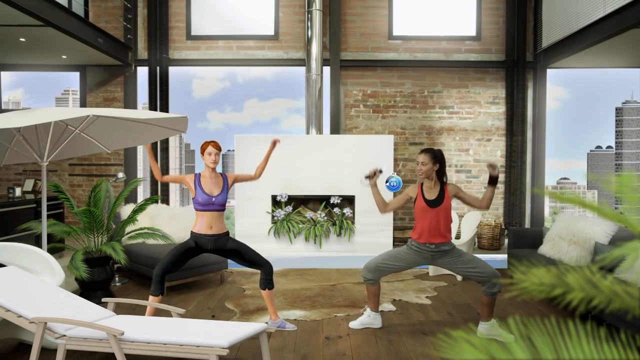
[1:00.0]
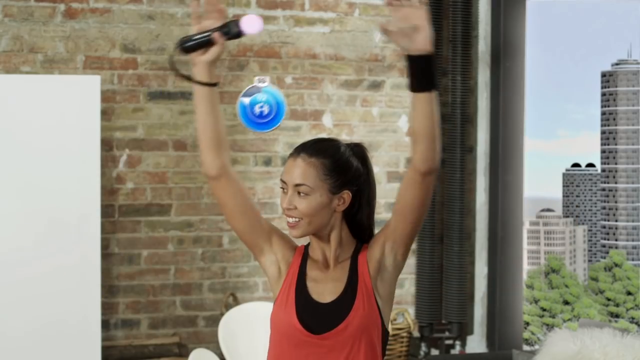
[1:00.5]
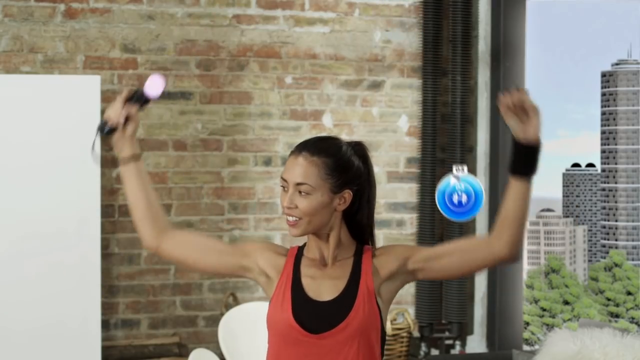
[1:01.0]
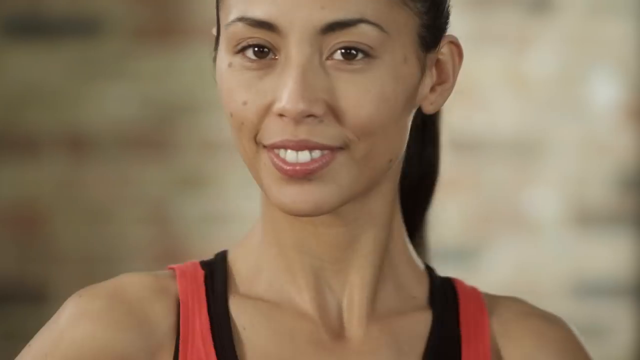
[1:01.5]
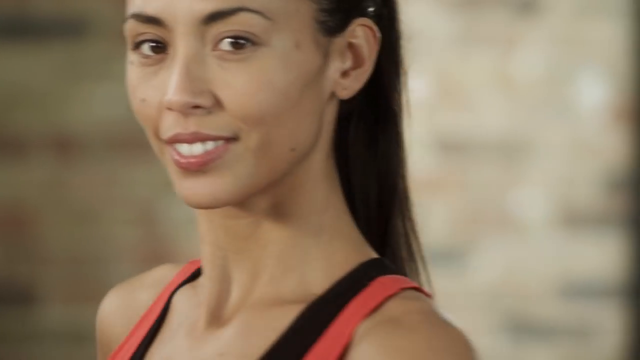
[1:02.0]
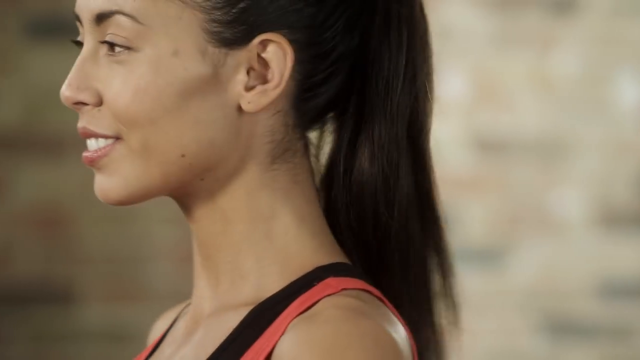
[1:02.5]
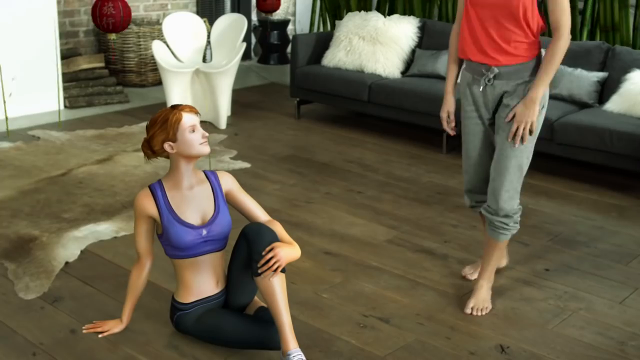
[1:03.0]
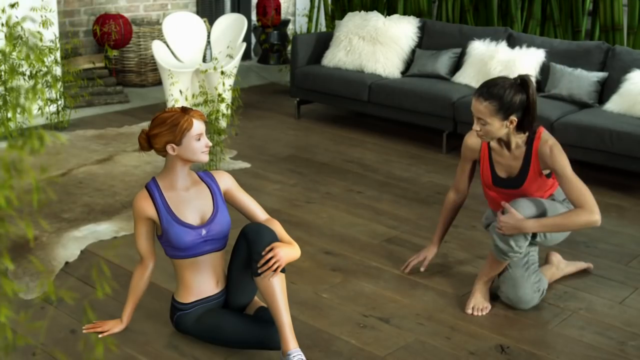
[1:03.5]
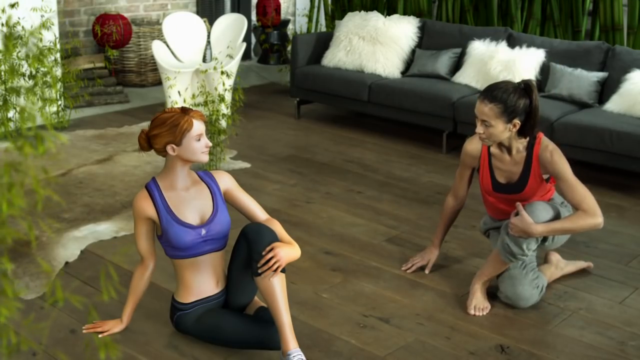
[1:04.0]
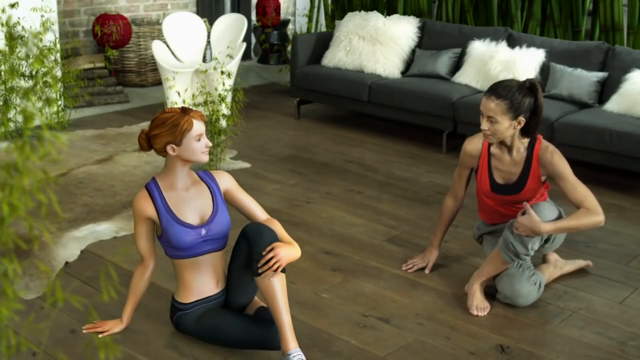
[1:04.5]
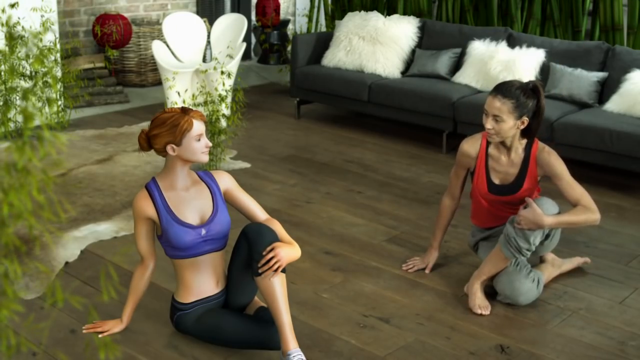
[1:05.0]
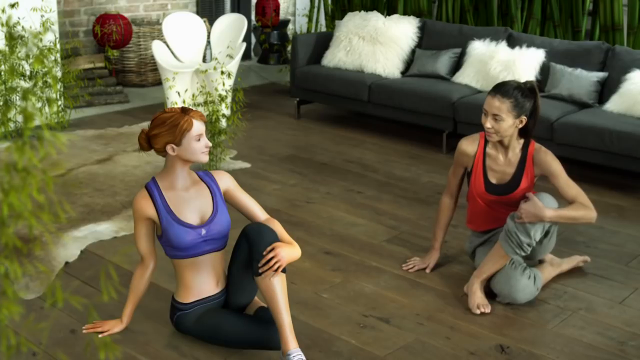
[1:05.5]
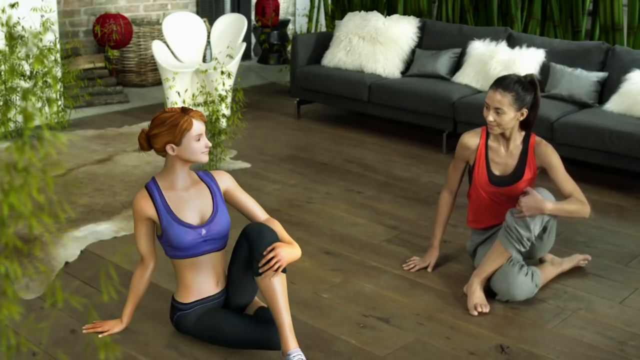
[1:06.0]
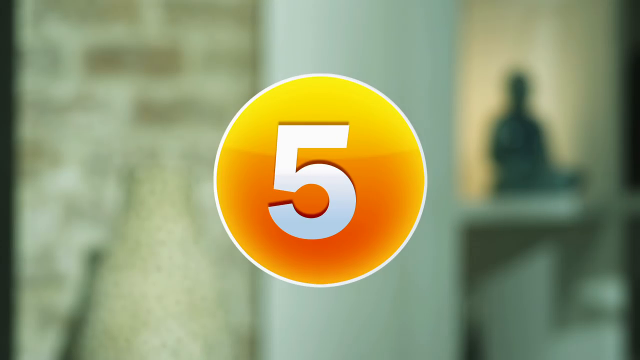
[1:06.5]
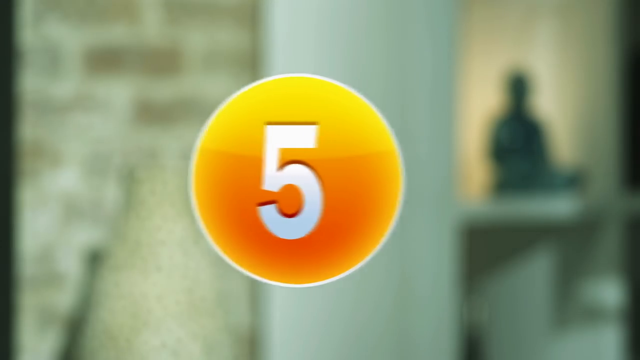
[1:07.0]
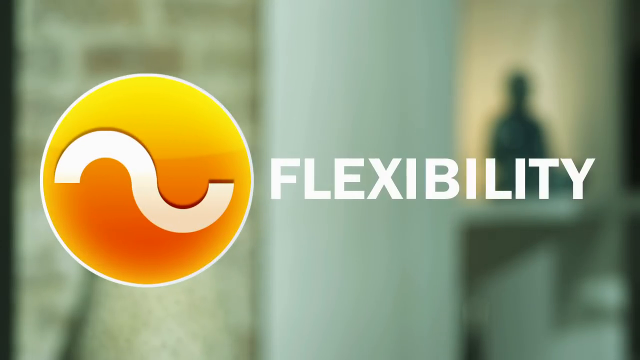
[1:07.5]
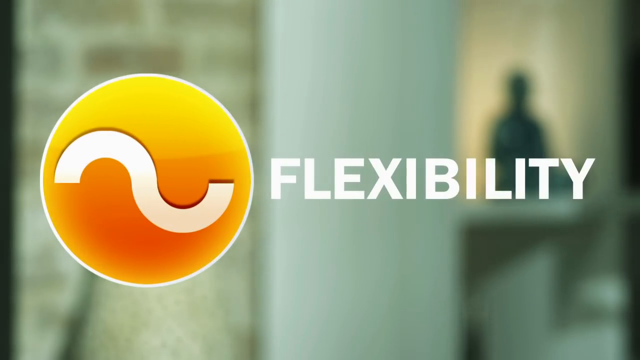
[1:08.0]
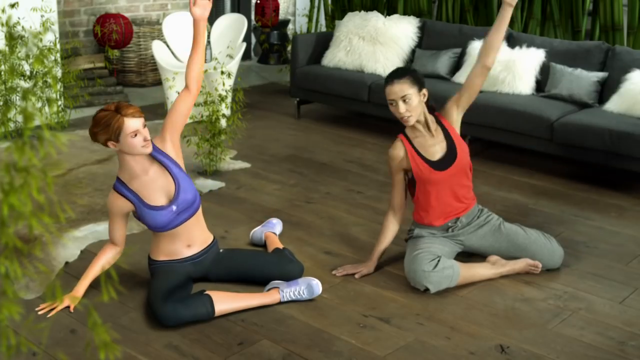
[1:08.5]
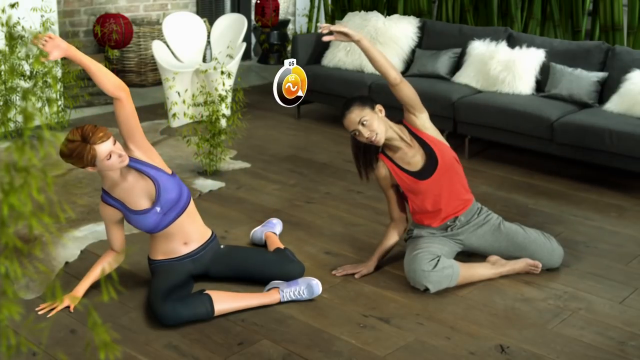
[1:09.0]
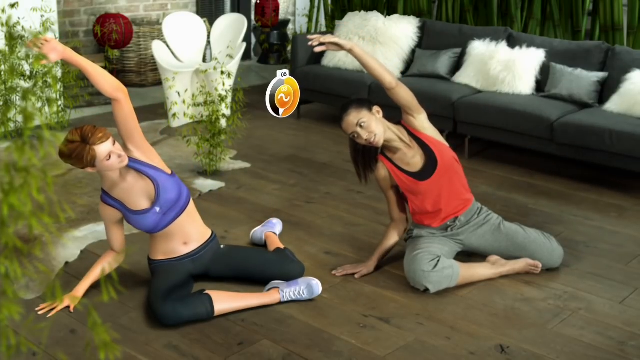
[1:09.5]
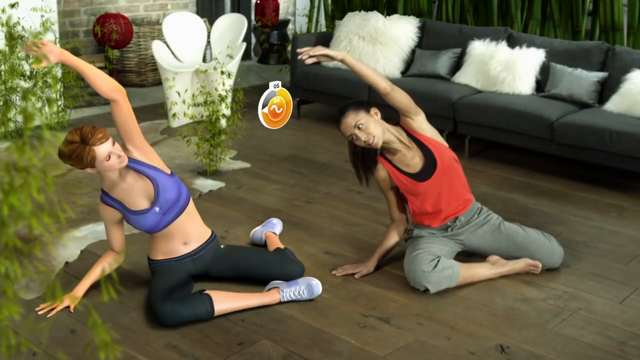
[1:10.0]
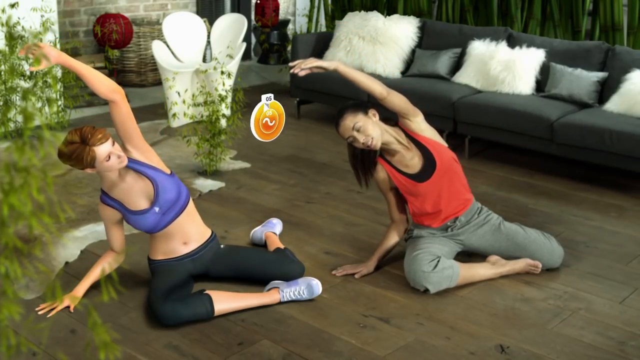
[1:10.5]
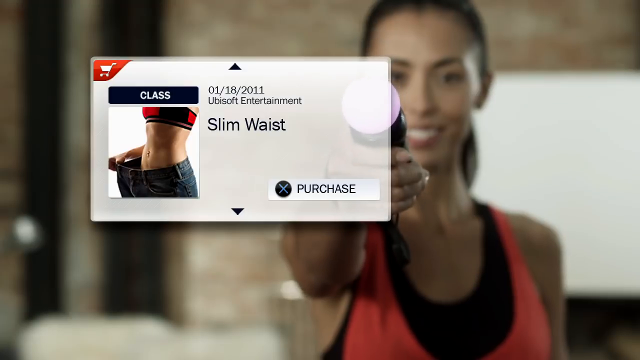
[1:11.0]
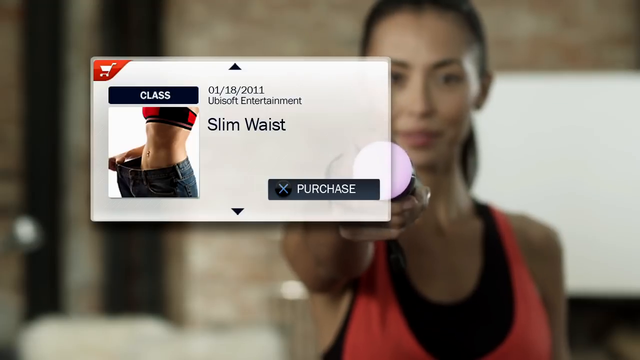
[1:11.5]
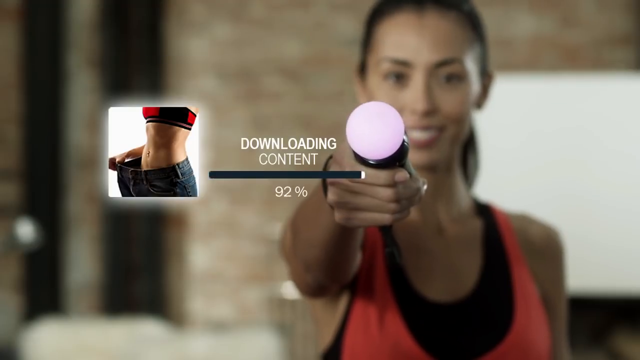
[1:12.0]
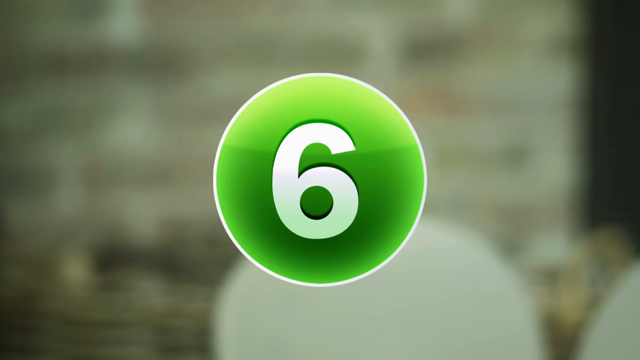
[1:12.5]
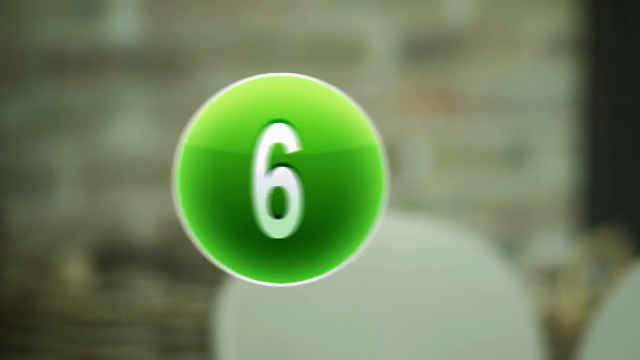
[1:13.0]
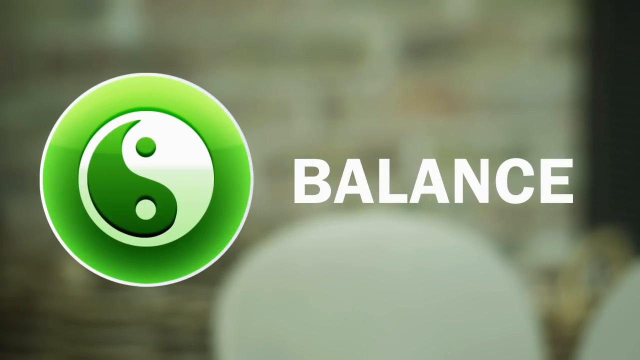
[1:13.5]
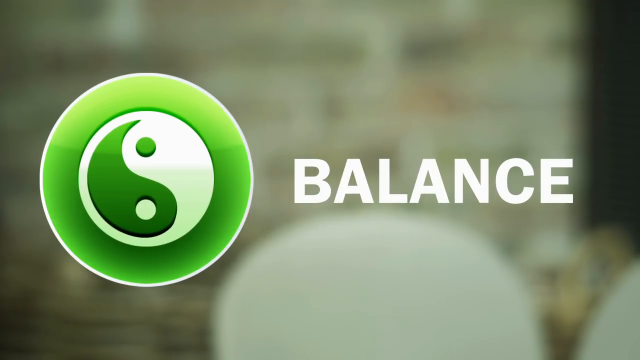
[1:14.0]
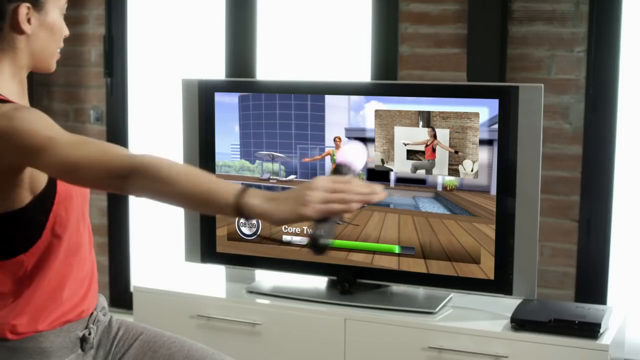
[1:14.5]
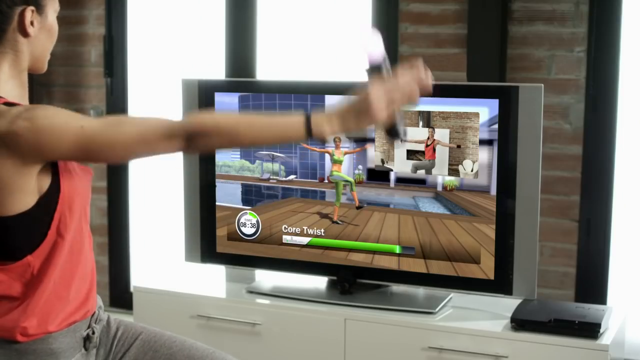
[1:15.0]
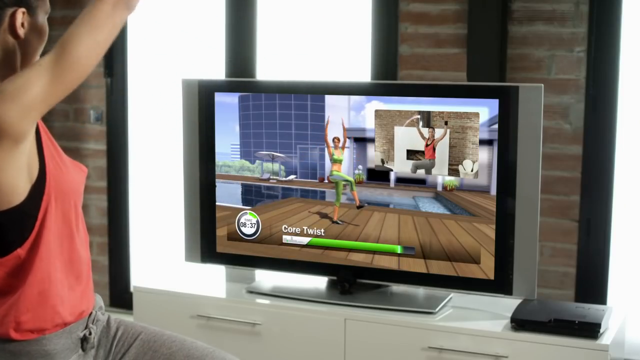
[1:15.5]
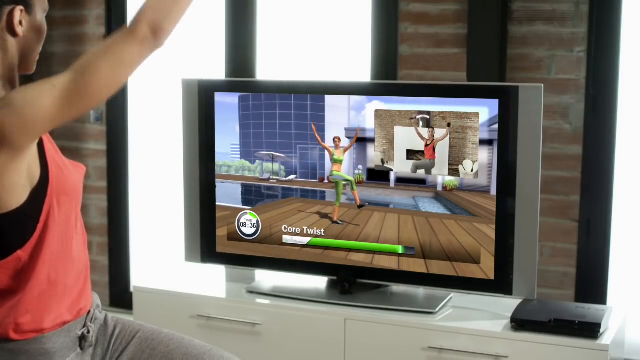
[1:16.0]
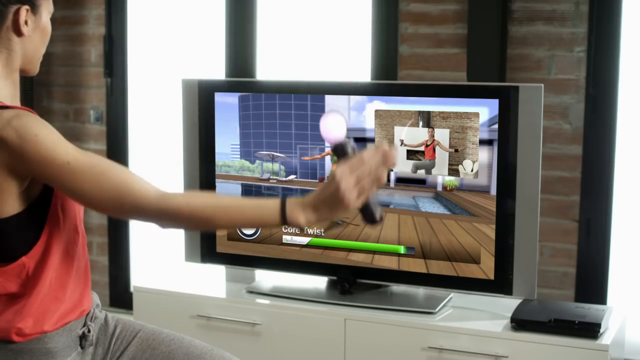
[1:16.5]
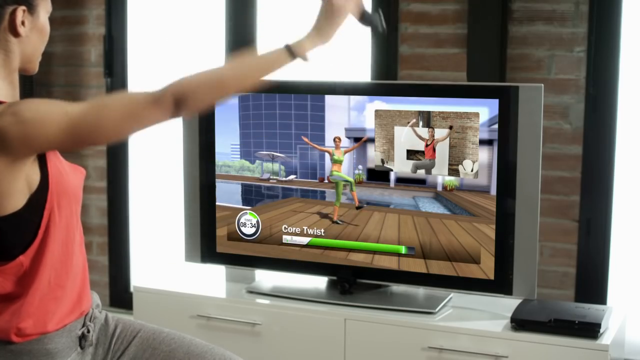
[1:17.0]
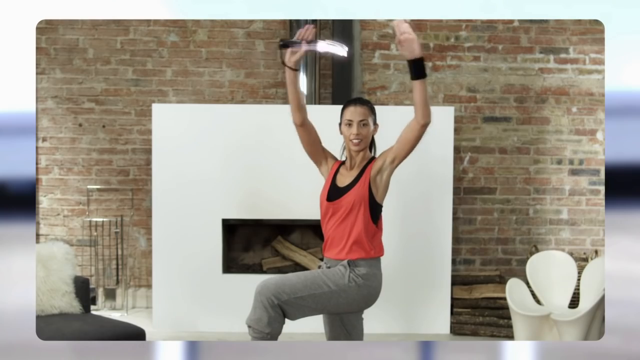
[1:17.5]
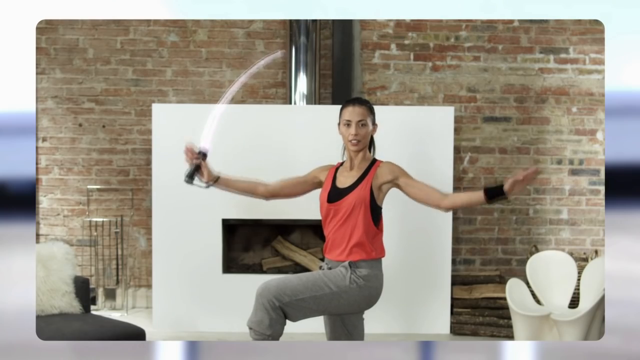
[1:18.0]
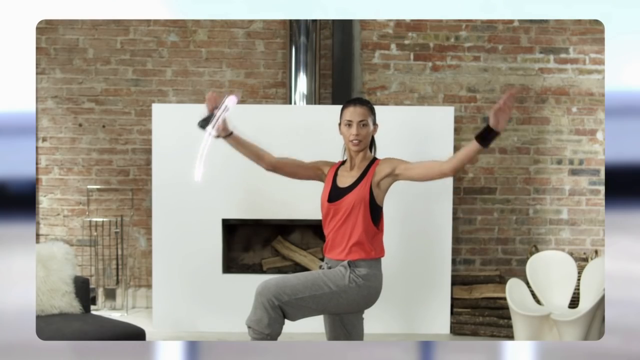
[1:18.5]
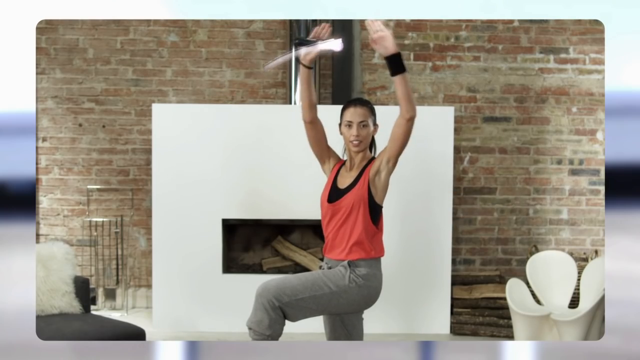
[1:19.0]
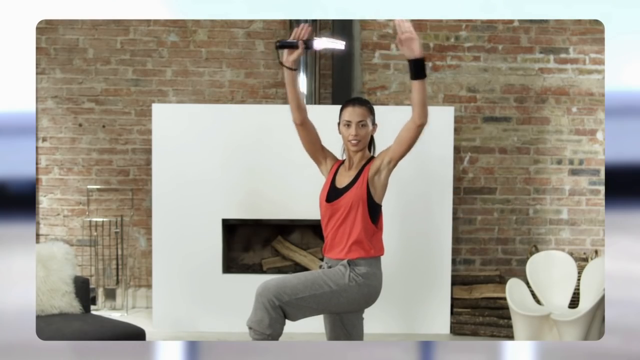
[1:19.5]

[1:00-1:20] In a living room, a woman on the right side and a digital woman on the left side are both squatting down with their knees pointing out in a very wide stance, moving their arms up and down: they bend their elbows around chest height, then put their arms straight up into the air, repeating this motion while staying squatted. A close-up of the human woman shows a blue circle icon sort of bouncing around her, a meter of some sort going around in a clockwise motion. In her right hand she holds a controller with a long black handle and a white circle ball on top. Another close-up shows the woman, who sort of looks like she may be Filipina, with her hair in a ponytail, high arched eyebrows, brown eyes and a smile with white teeth. She sort of looks at the camera and smiles, then turns her head to a side profile. The camera pans out to show more of the living room, and the woman sits down next to the digital woman, who is sitting on the floor. A transition screen shows a yellow circle with a number five inside; the five sort of turns into a squiggly line that looks like a sideways S, and next to it is "flexibility". Back in the living room, the human woman and the digital woman sit on the floor with one knee bent in front of them resting on the ground and the other knee sort of bent behind them, one hand resting on the floor and the other in the air, as they lean over and stretch their sides. The scene changes to a close-up of the woman holding out the controller in front of her, with a virtual screen showing a picture of someone holding a pair of big jean pants out from their waist, as if showing they lost weight. On the right side it says "slim waist" and there is a button that says "purchase", which the woman clicks with her controller. Then "downloading content" appears, and a progress bar loads very quickly and finishes once it gets to a hundred. A transition screen shows a green number six, which turns into a yin-yang, with "balance" to the right. In her living room, the woman looks at a TV showing a video of a virtual instructor doing some exercises, along with what looks like a webcam video of the woman doing the exercises as well, possibly some kind of live class. They appear to stand on one leg with one knee bent in front of them, moving their arms up and down to about shoulder level and back up again, repeating the motion, and another shot shows the woman doing this exercise.